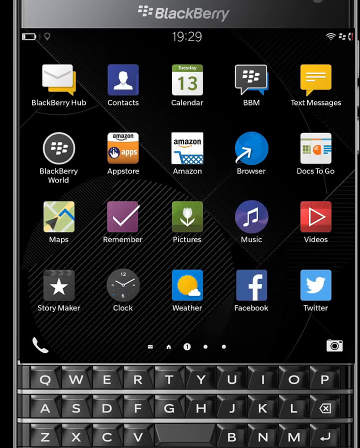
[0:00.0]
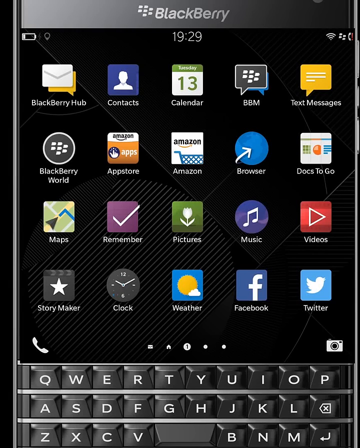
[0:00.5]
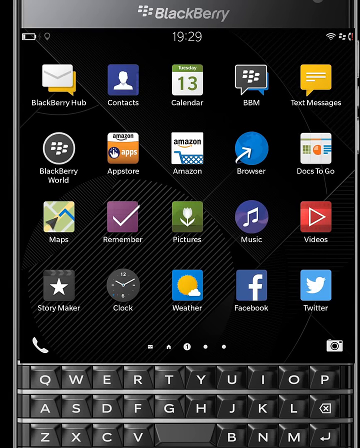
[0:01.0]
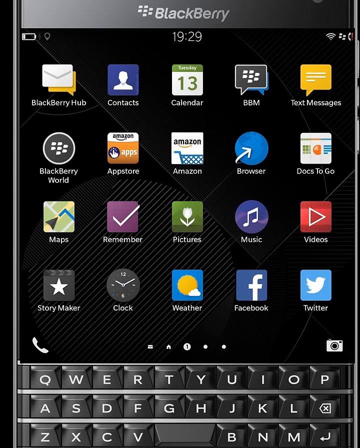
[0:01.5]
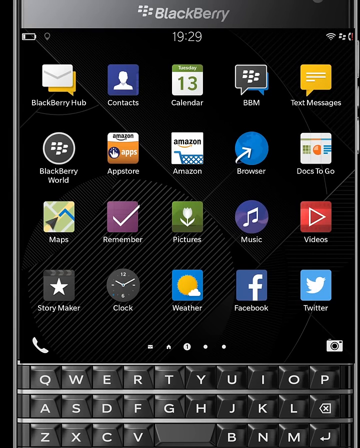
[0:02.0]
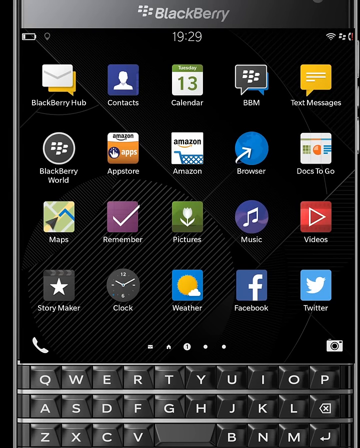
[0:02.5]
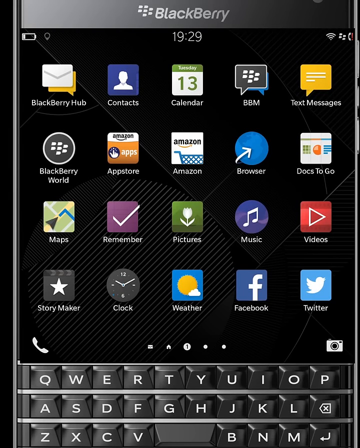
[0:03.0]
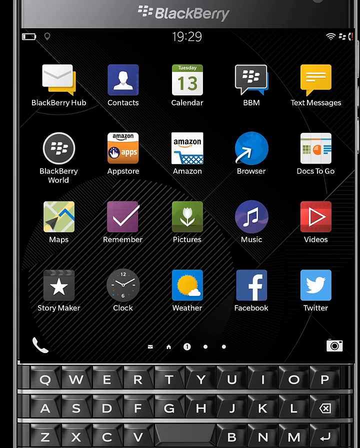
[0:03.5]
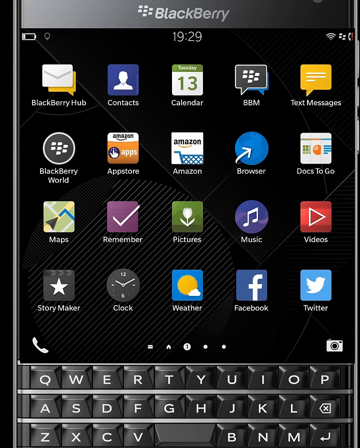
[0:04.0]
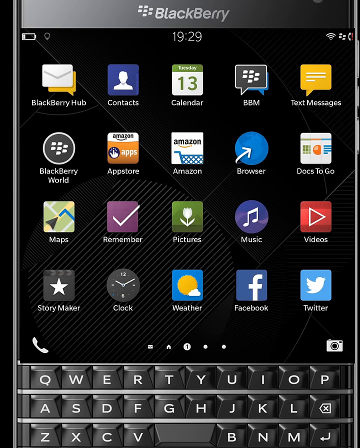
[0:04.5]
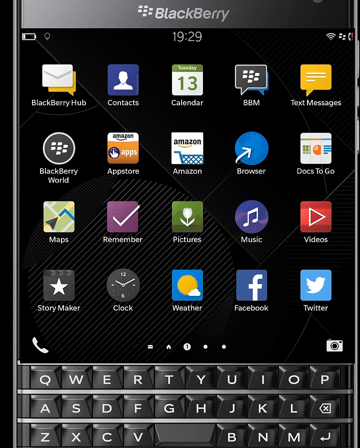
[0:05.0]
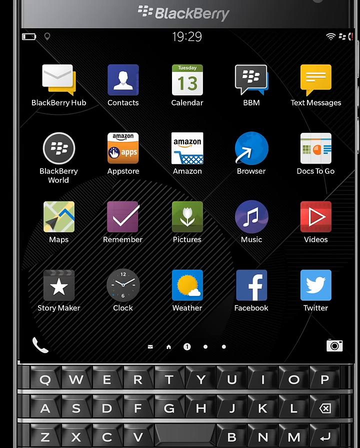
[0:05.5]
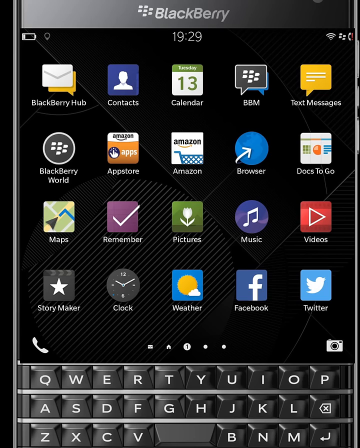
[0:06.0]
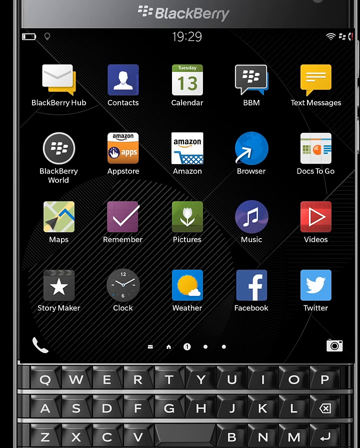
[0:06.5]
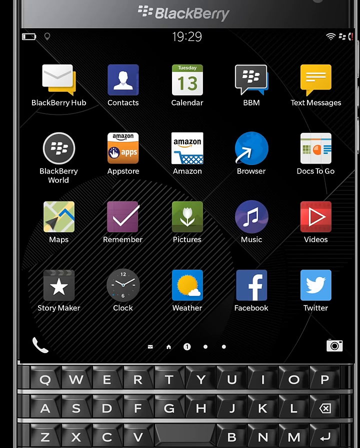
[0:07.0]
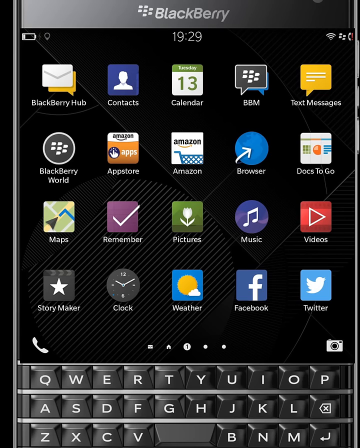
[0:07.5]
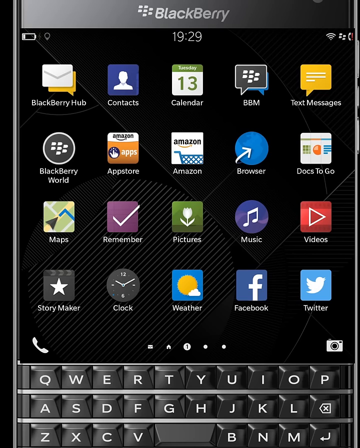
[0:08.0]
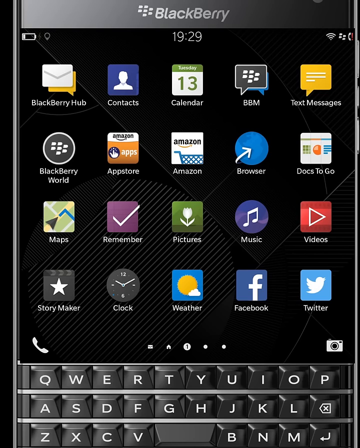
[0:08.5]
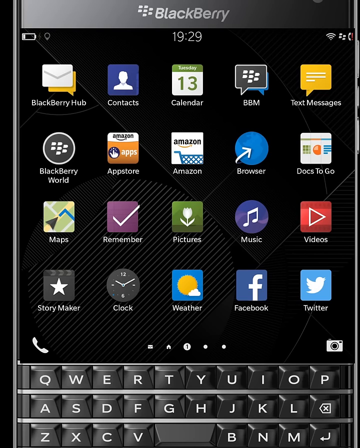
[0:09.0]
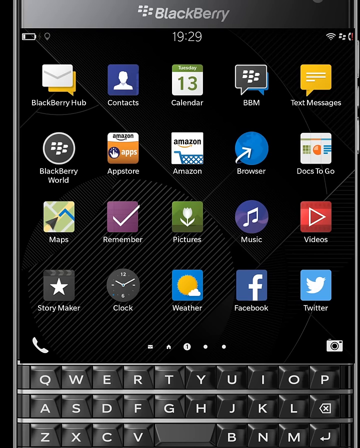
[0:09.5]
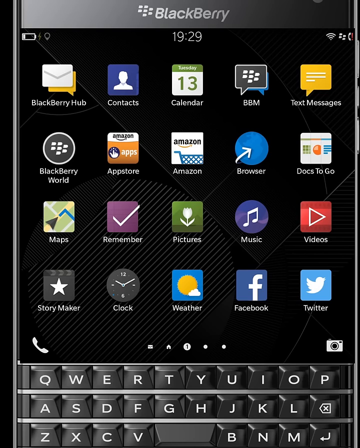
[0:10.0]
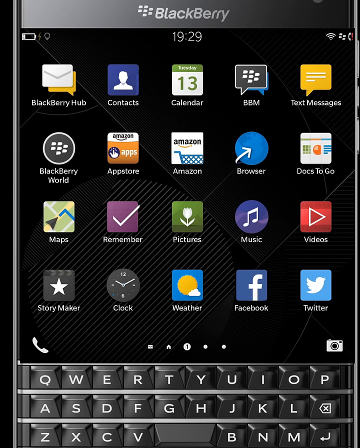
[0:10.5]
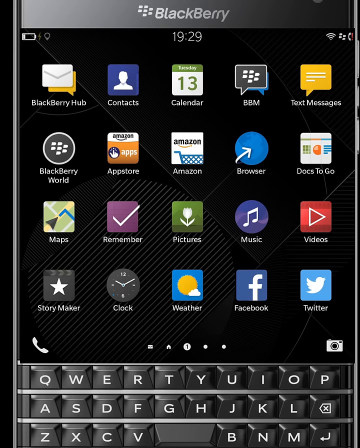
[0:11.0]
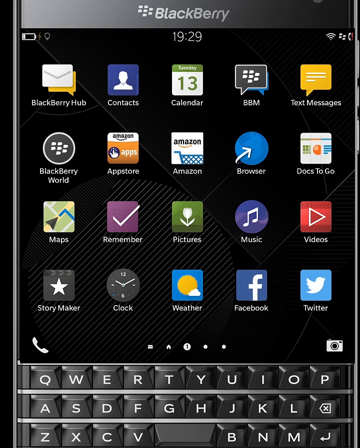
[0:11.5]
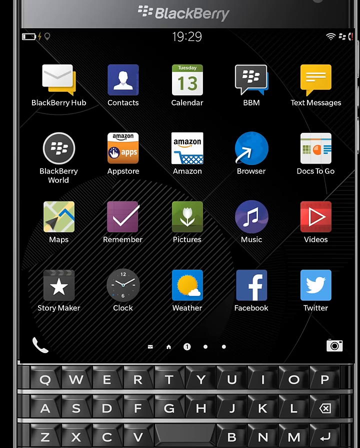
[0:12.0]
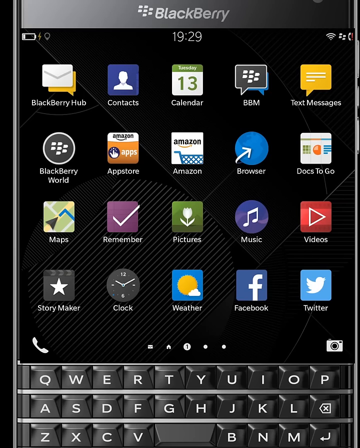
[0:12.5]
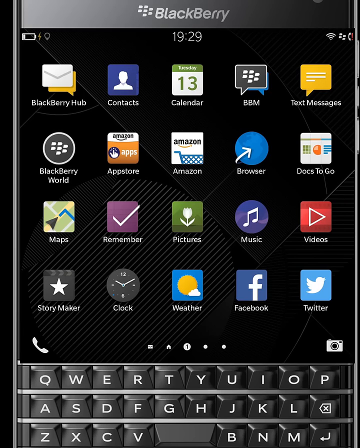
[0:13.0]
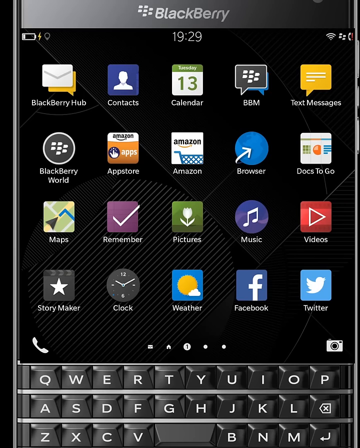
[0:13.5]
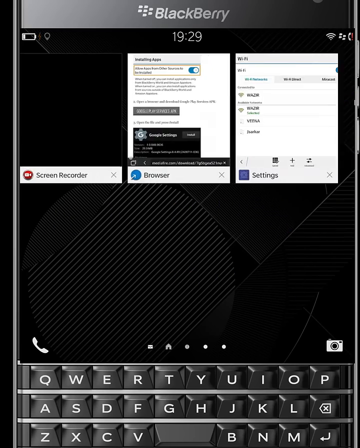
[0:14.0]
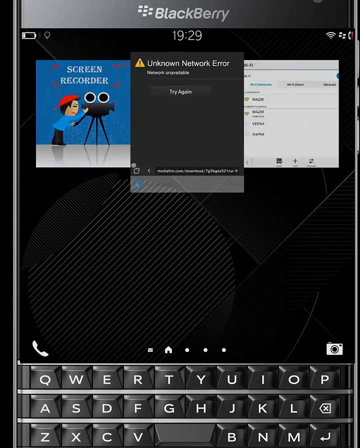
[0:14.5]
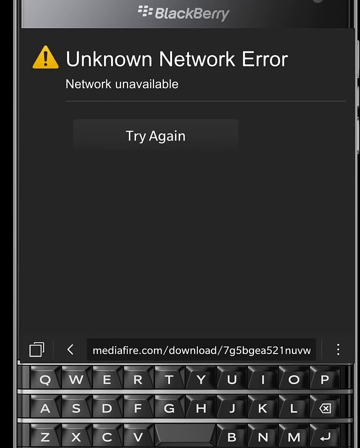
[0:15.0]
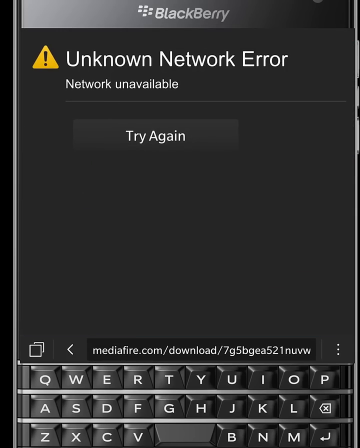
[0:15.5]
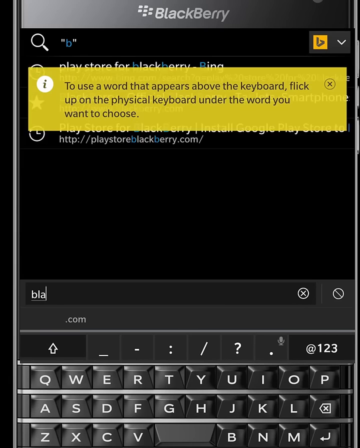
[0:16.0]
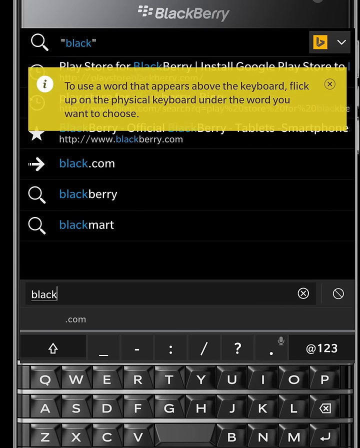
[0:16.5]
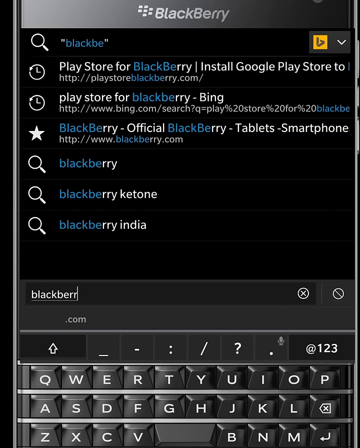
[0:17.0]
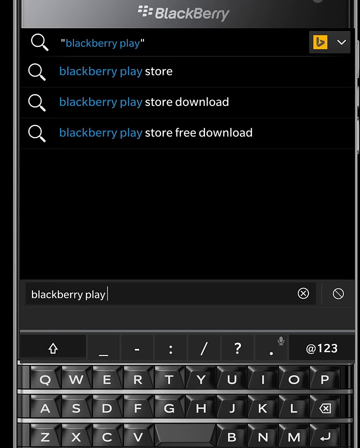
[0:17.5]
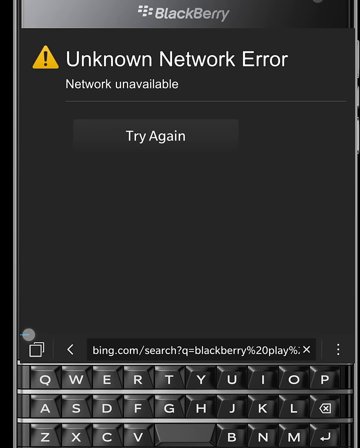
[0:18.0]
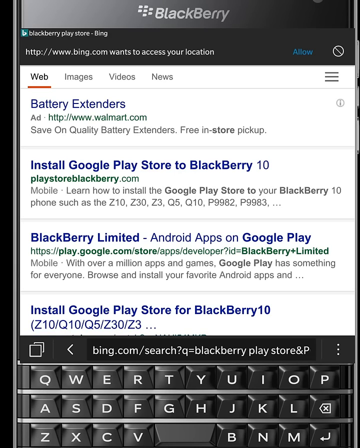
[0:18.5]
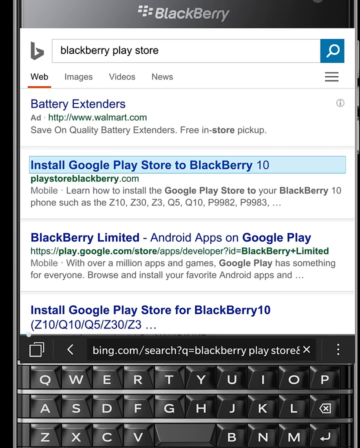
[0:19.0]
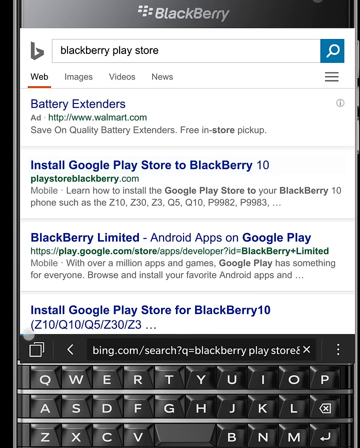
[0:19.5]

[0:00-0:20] The screen shows the apps on a phone, which looks like a BlackBerry. Someone appears to be trying to do something on the phone, and they seem to get a network error. It is not clear which app they press; there is apparently an arrow for the browser, so they seem to be opening the browser itself. They appear to be searching for the BlackBerry Play Store but cannot seem to find it because of some kind of network problem. The screens move quickly.